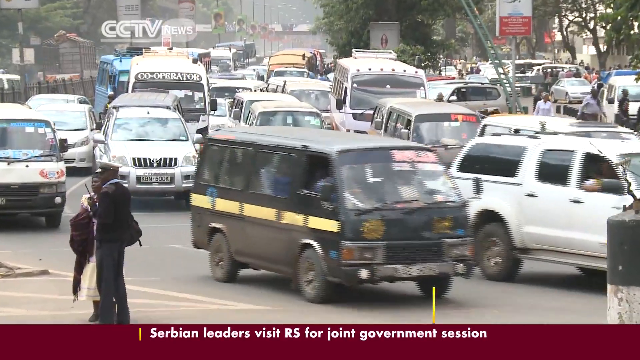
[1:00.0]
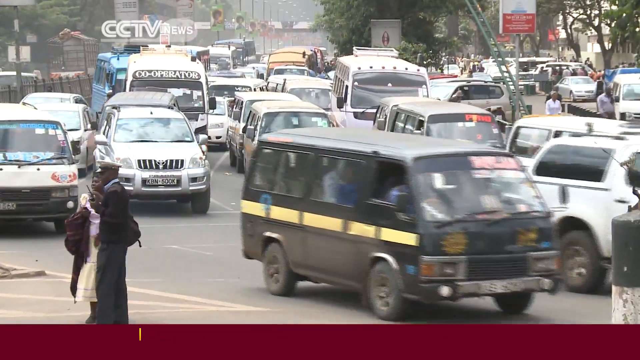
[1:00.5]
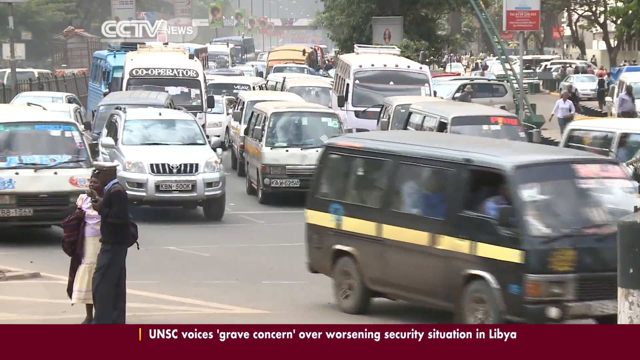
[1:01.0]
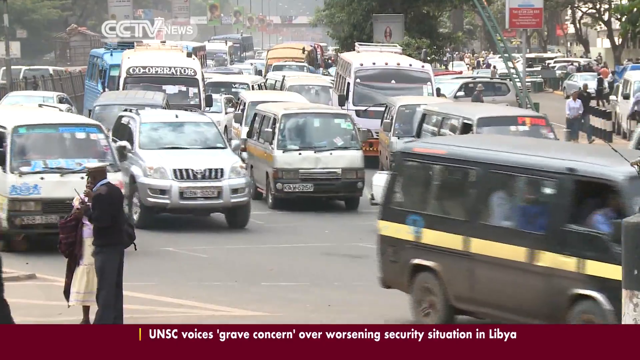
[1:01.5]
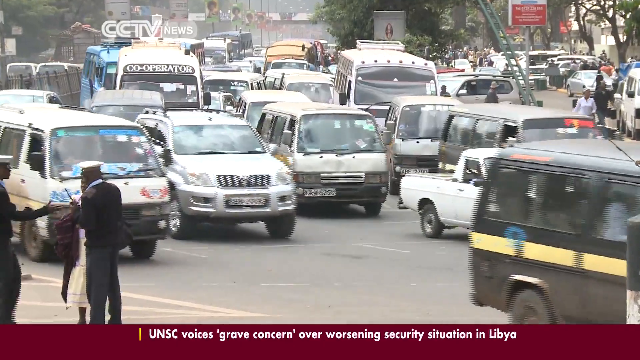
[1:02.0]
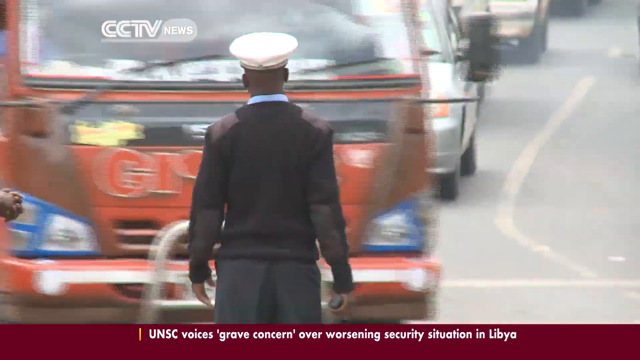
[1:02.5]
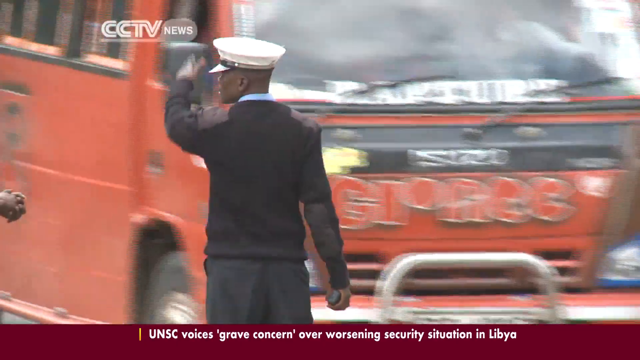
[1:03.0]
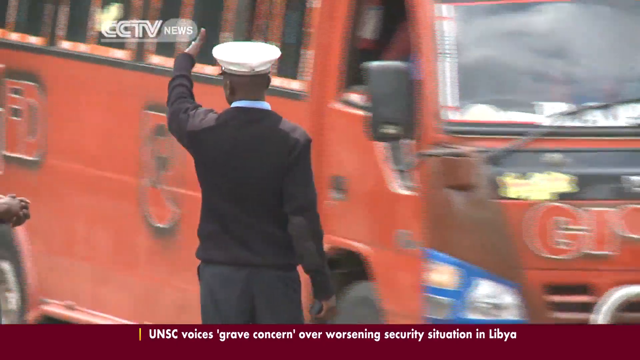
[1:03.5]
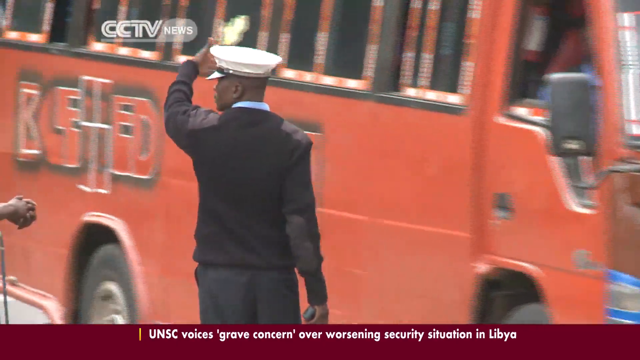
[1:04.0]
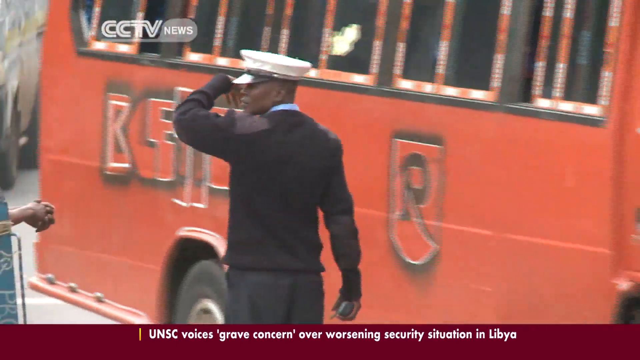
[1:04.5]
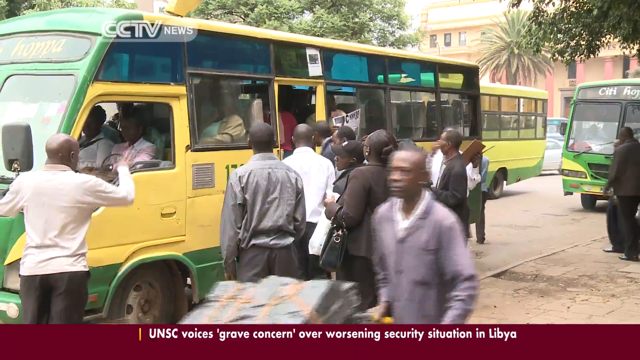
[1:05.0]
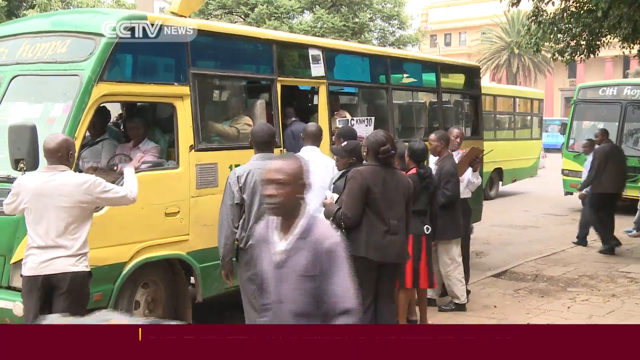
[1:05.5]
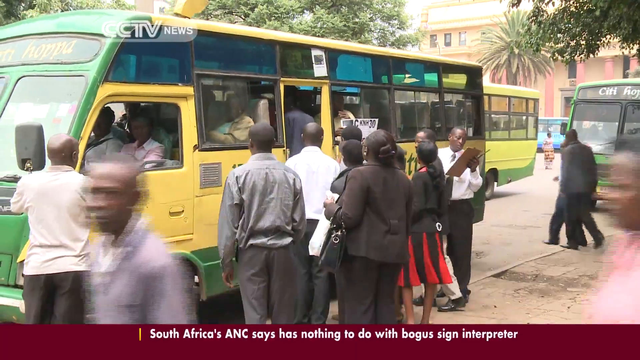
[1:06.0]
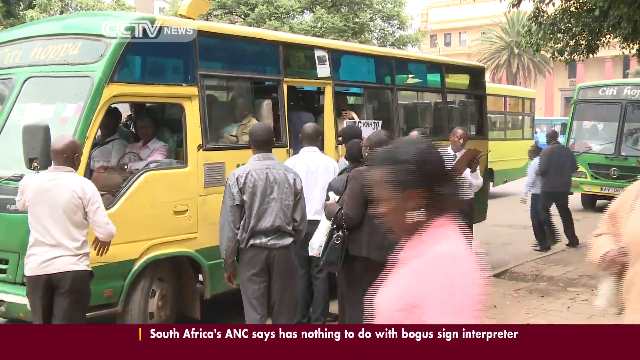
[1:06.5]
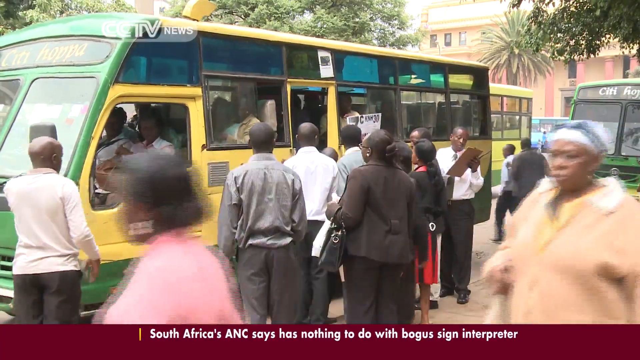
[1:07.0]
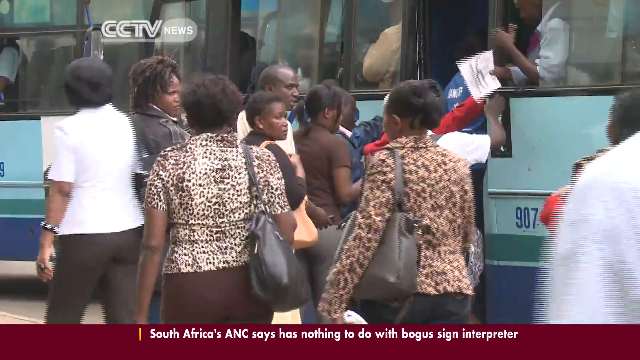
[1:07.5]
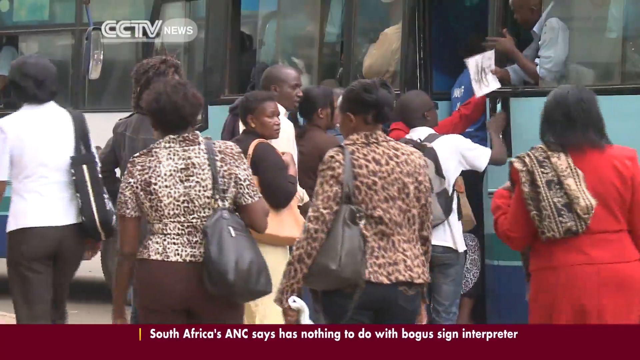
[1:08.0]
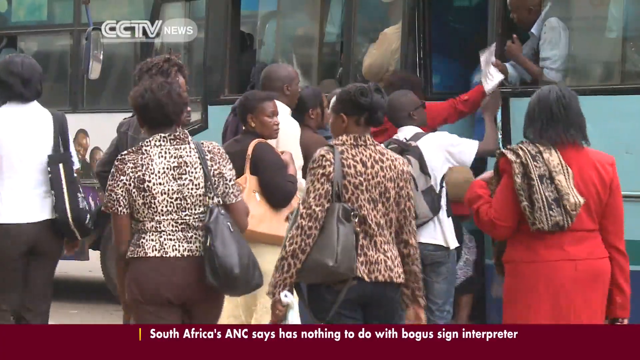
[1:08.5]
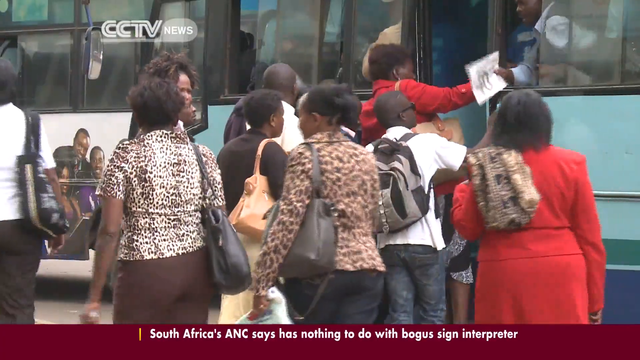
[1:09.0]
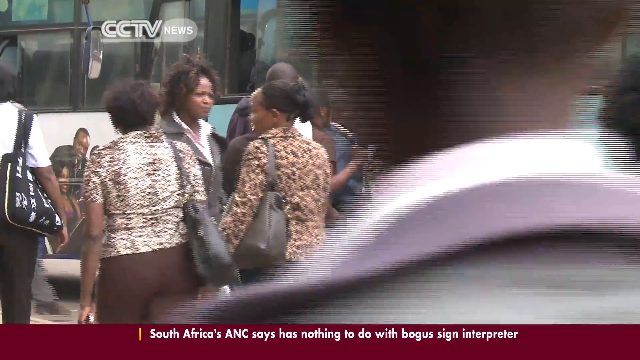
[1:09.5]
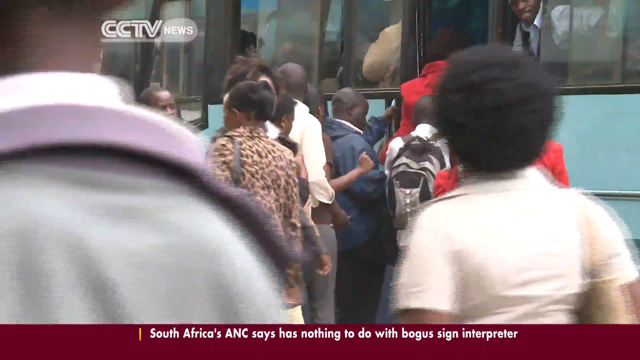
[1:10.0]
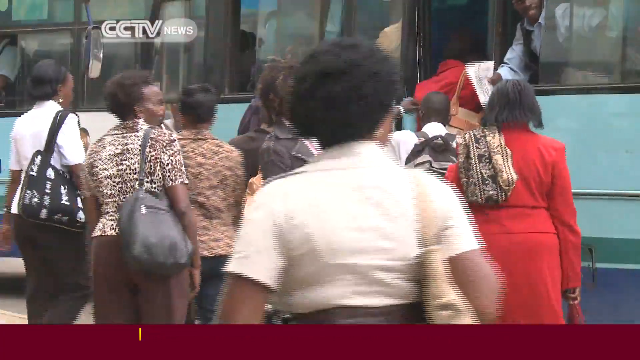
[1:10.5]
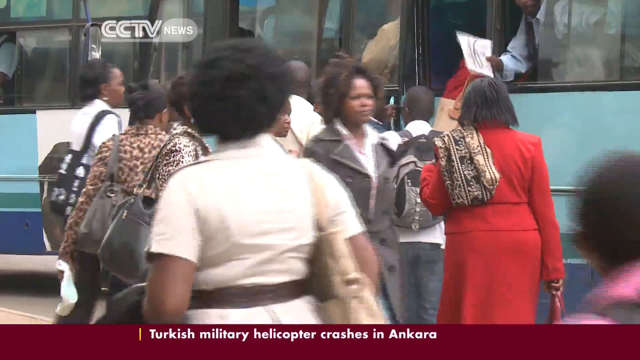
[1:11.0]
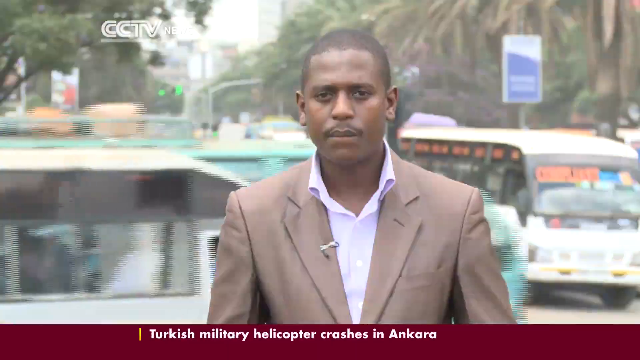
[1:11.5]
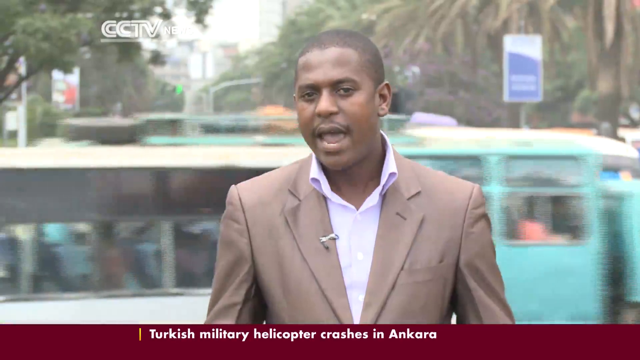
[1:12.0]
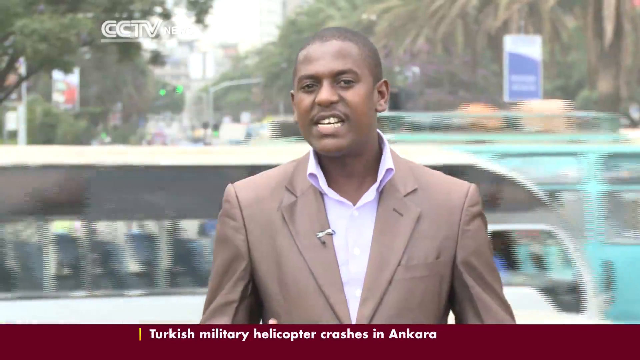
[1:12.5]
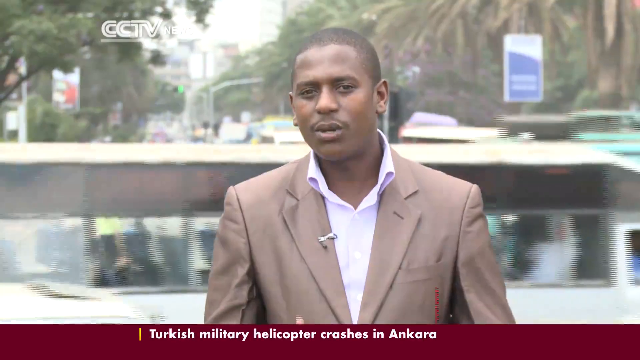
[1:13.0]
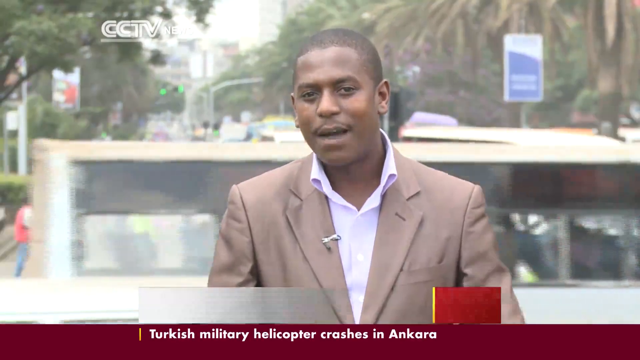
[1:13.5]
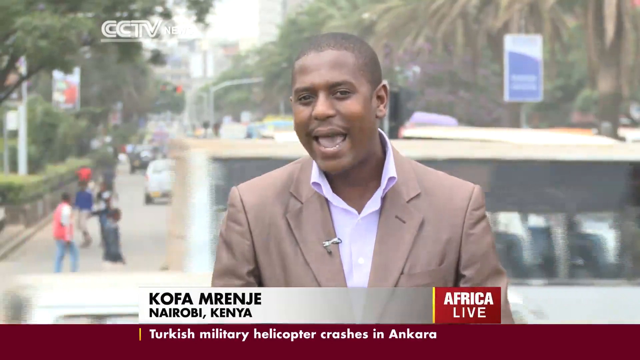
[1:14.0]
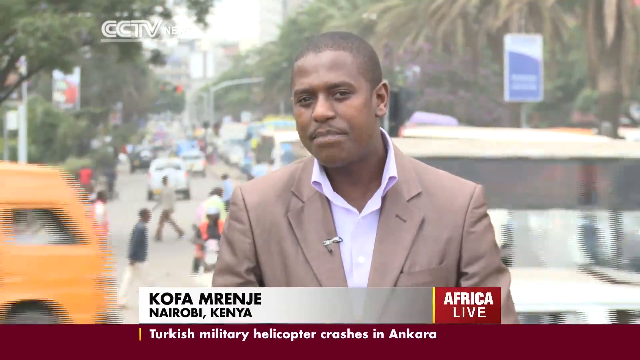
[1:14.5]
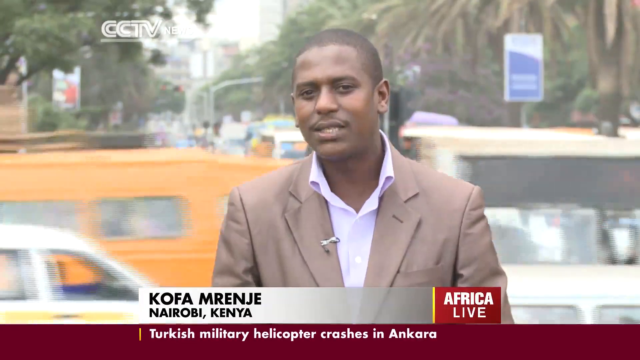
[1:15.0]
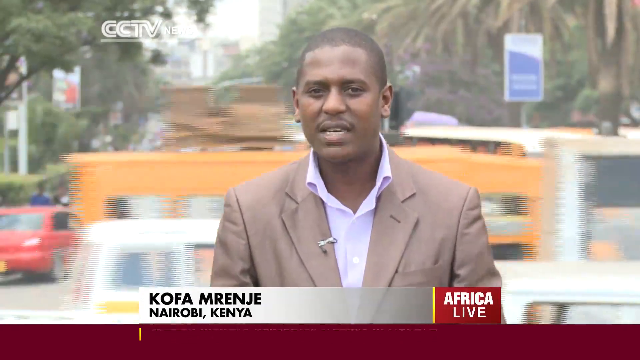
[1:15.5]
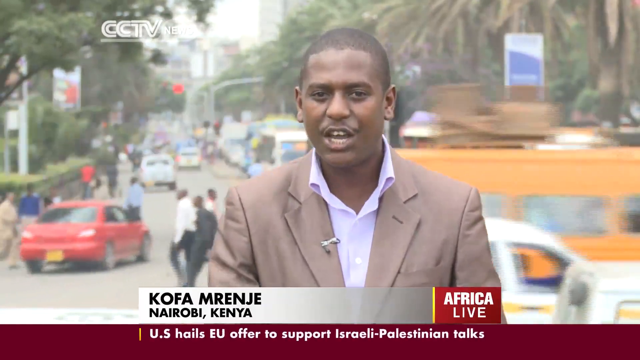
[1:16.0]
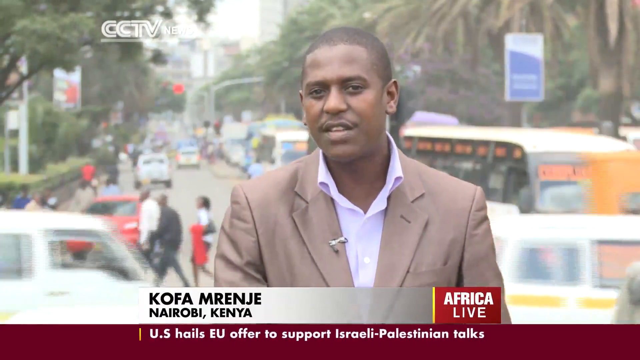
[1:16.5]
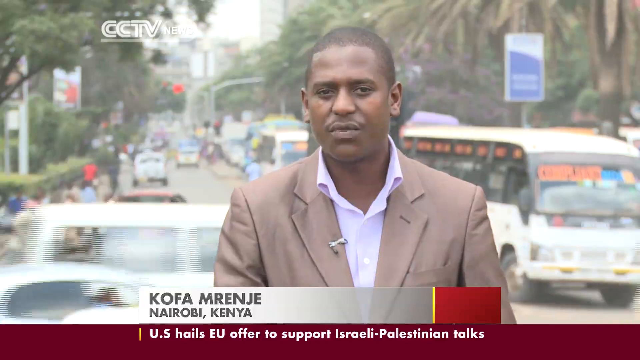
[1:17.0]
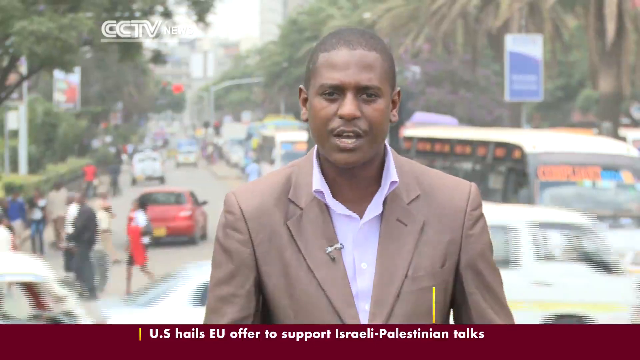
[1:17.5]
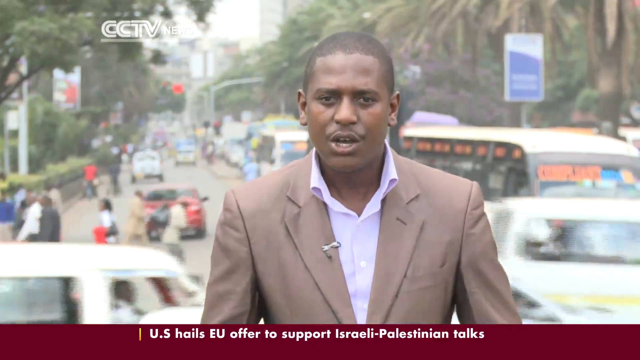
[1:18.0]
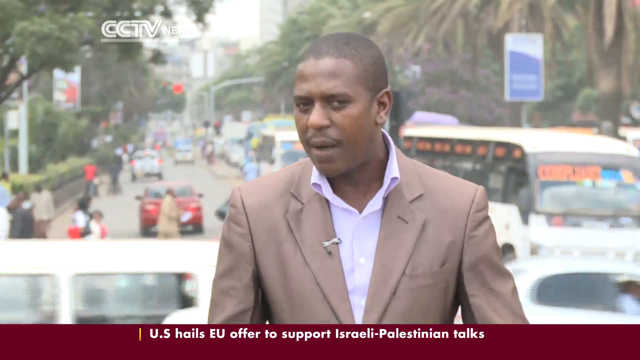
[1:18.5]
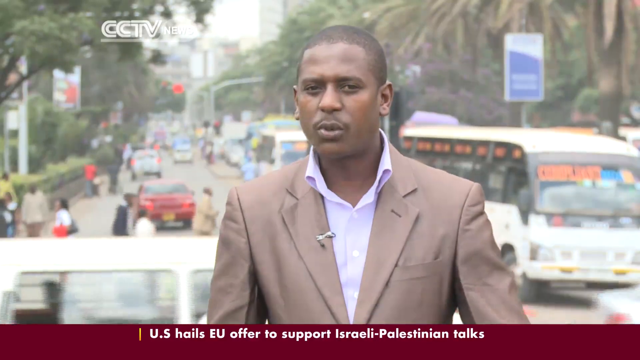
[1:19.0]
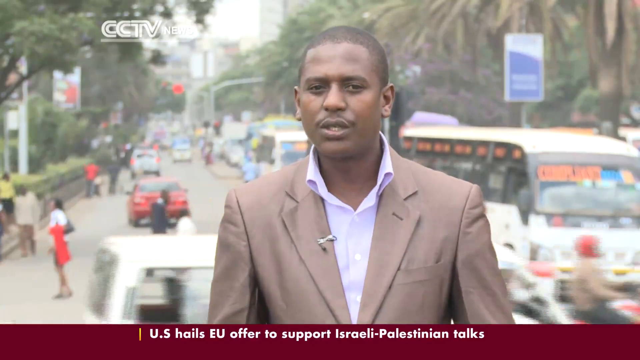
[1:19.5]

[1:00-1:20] The footage, apparently from CCTV news, shows lots of traffic in numerous lanes moving very slowly. A man in a uniform directs traffic. People are loaded onto a bus; no metal detectors are visible here. The reporter, Akafa Marenje from Nairobi, Kenya, wears a tan suit and a light pink or white shirt with no tie, and has a very slight mustache. He talks while people walk in the background. He is right by an intersection, with cars going by him.